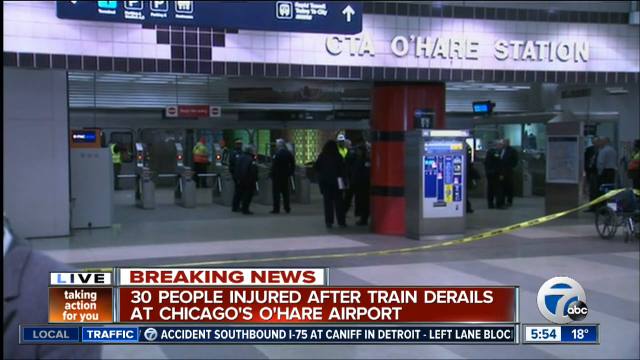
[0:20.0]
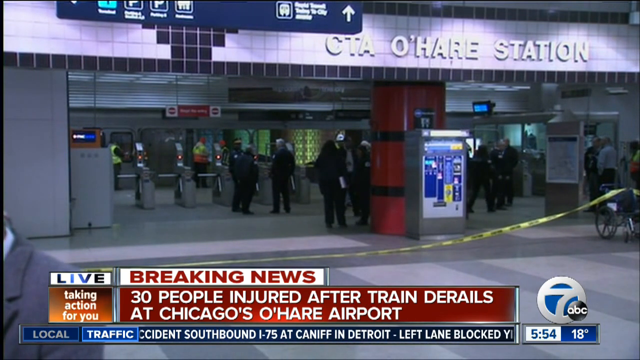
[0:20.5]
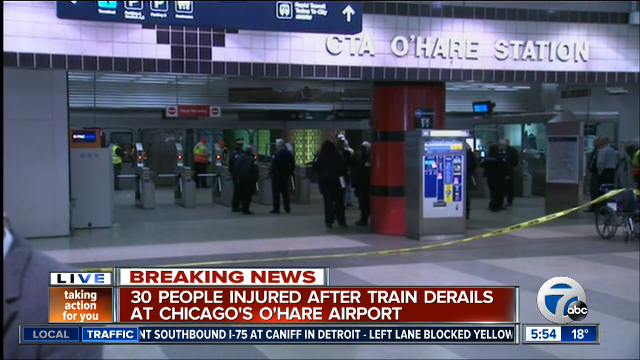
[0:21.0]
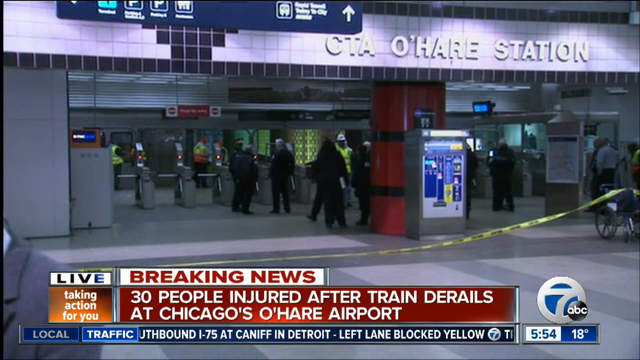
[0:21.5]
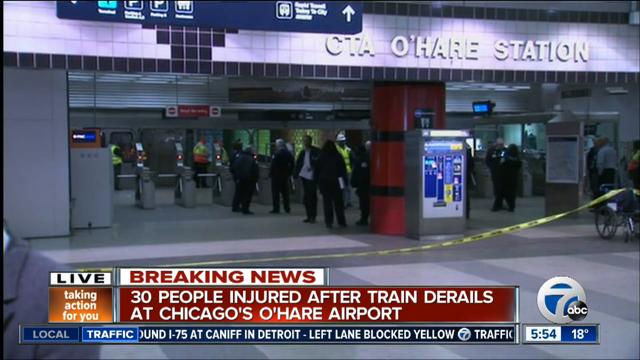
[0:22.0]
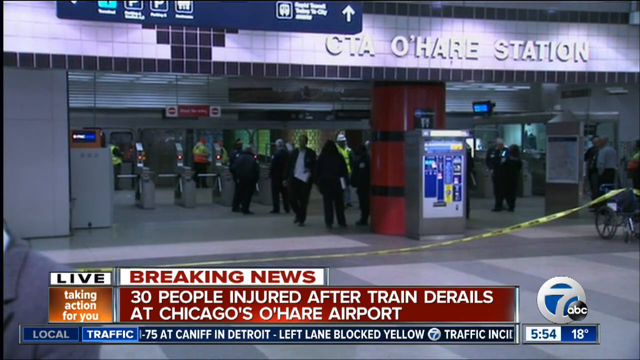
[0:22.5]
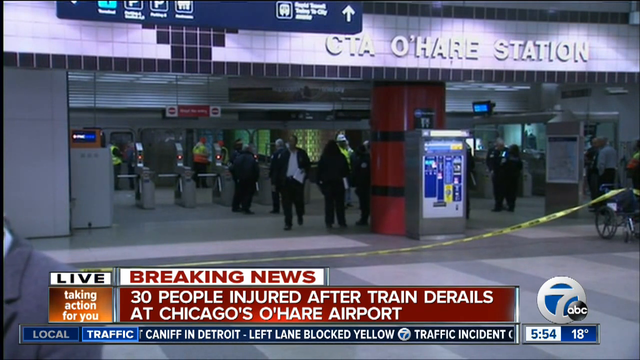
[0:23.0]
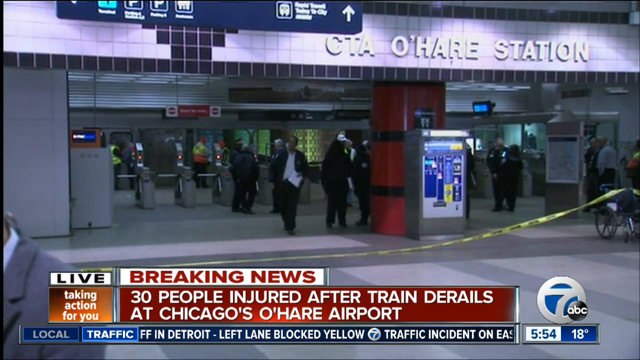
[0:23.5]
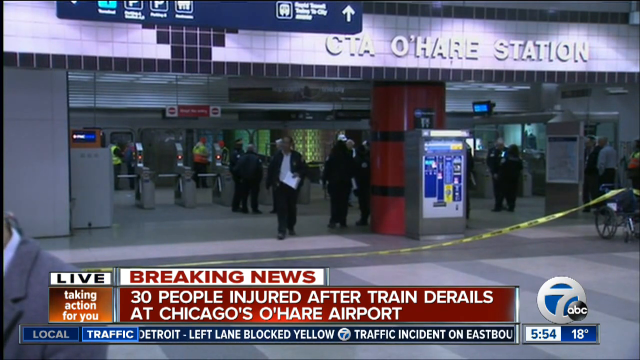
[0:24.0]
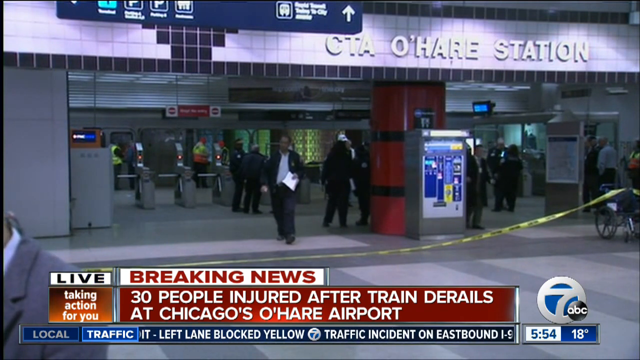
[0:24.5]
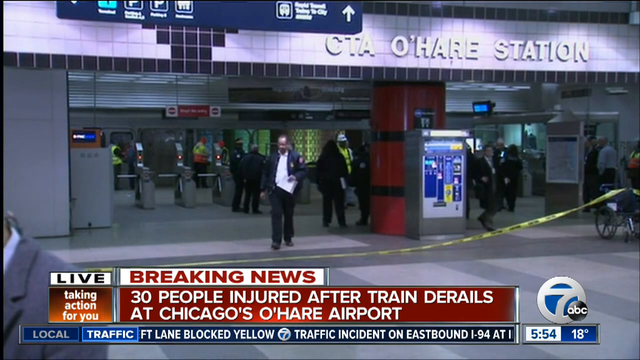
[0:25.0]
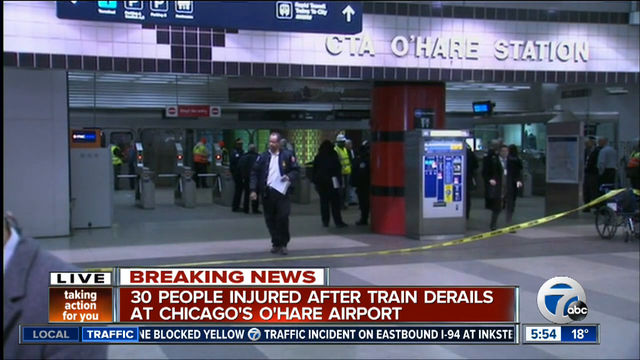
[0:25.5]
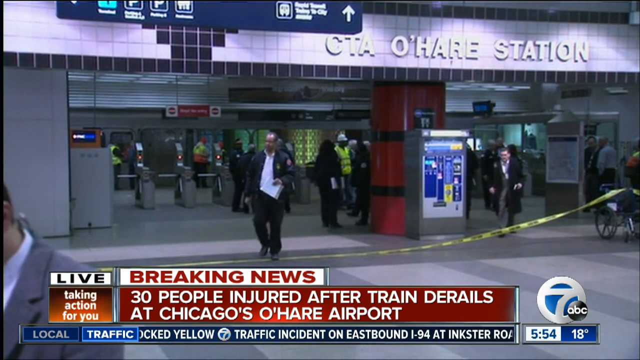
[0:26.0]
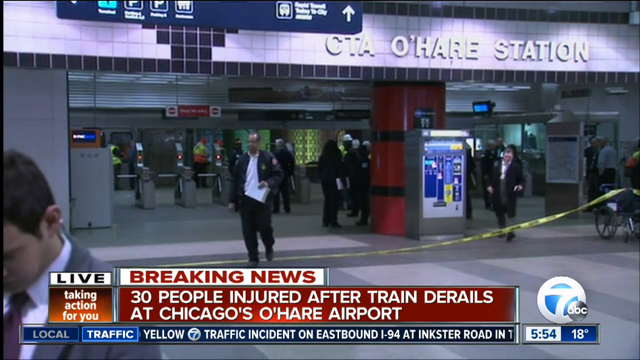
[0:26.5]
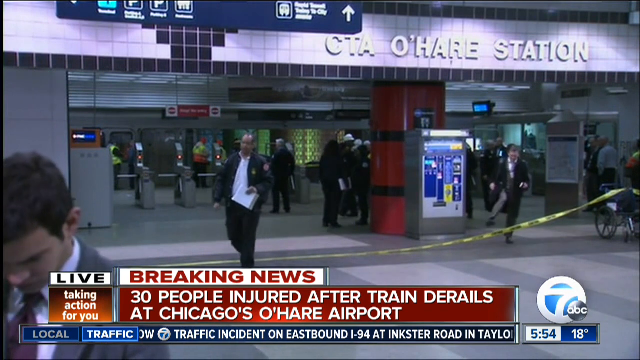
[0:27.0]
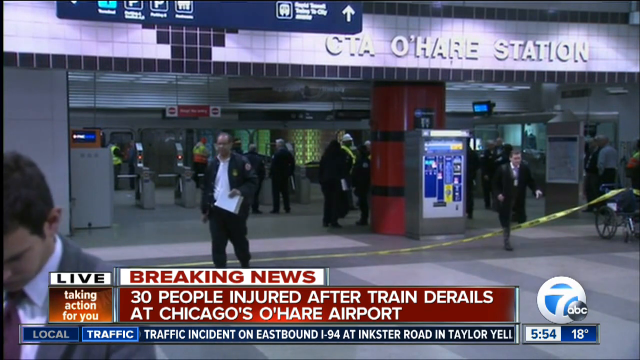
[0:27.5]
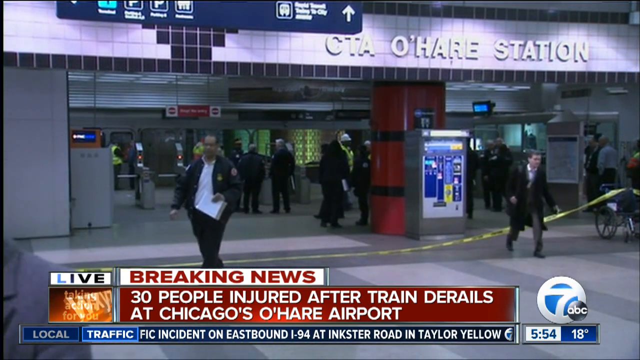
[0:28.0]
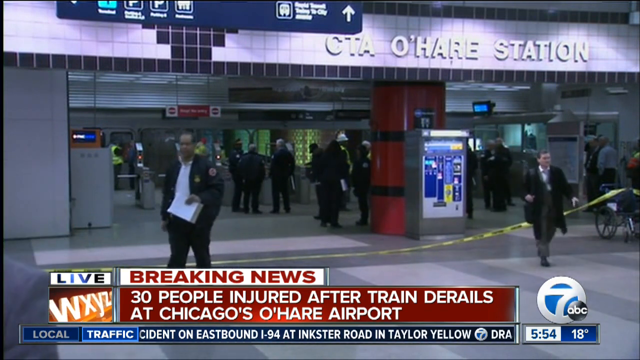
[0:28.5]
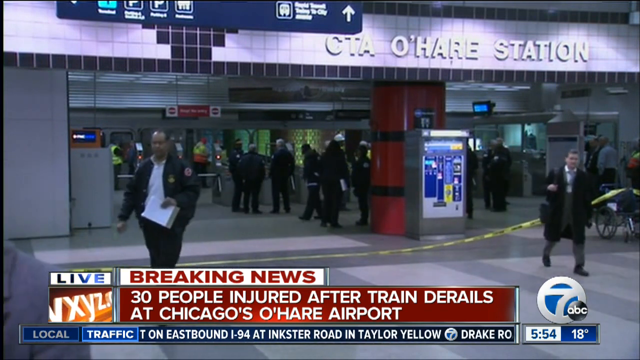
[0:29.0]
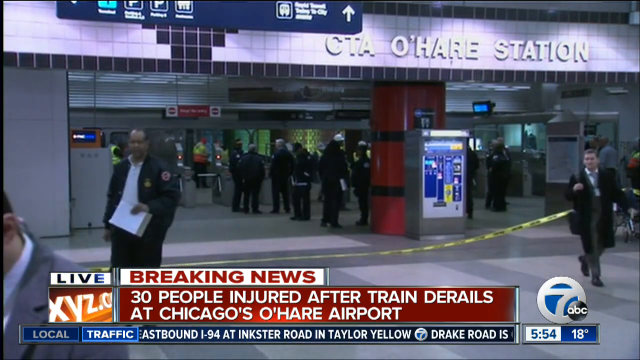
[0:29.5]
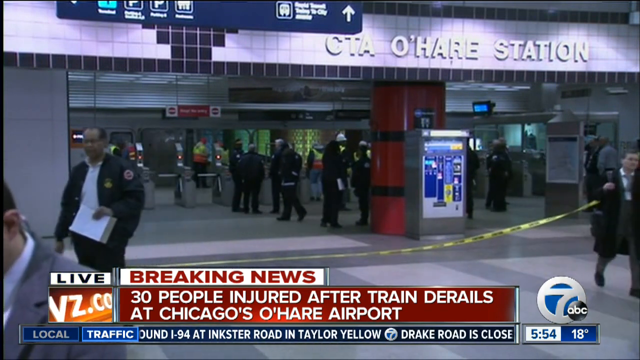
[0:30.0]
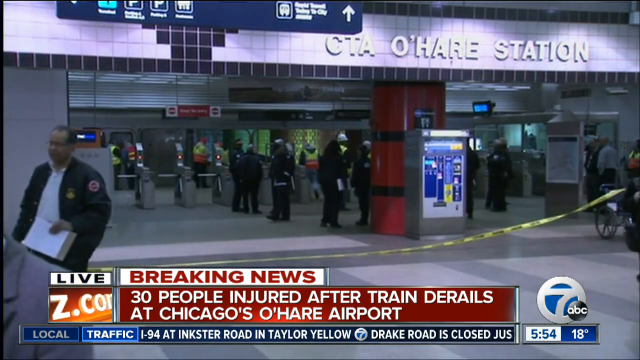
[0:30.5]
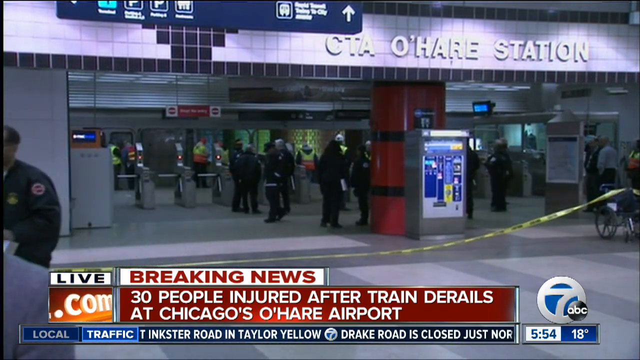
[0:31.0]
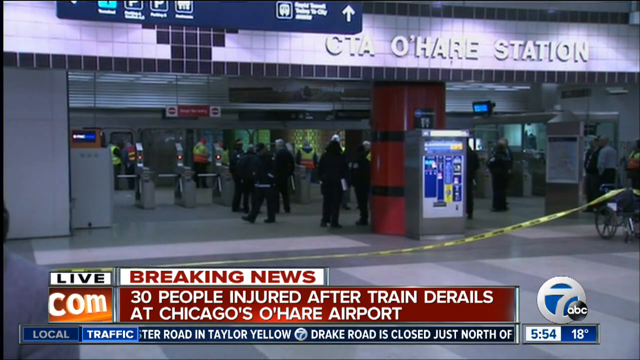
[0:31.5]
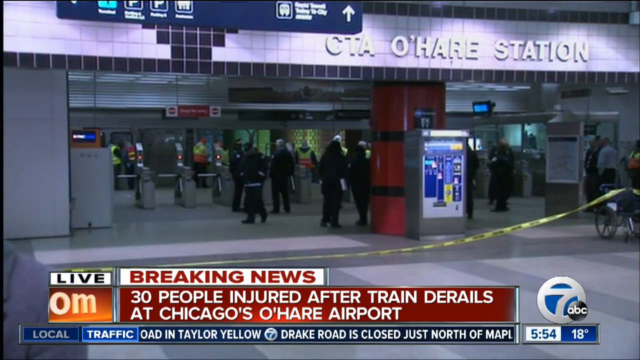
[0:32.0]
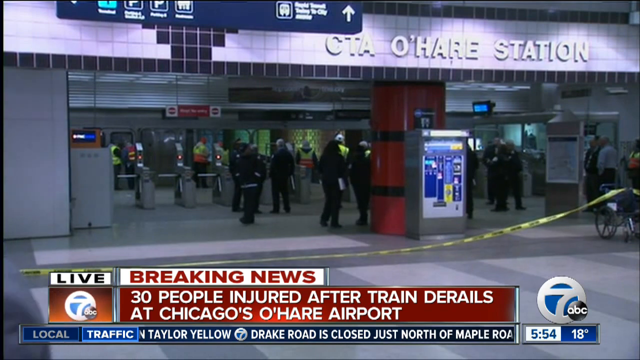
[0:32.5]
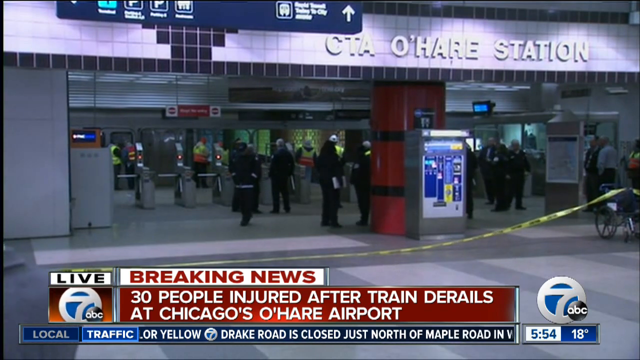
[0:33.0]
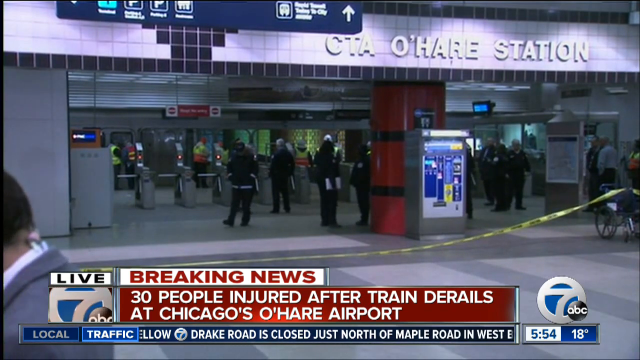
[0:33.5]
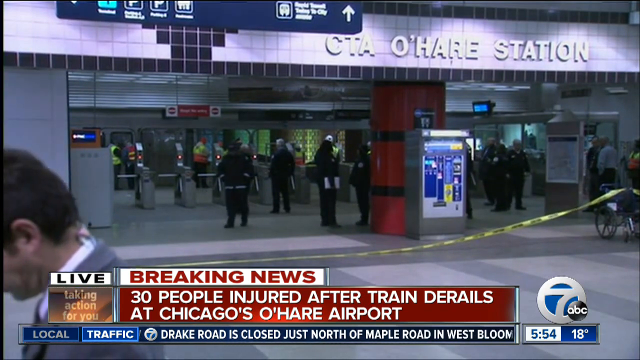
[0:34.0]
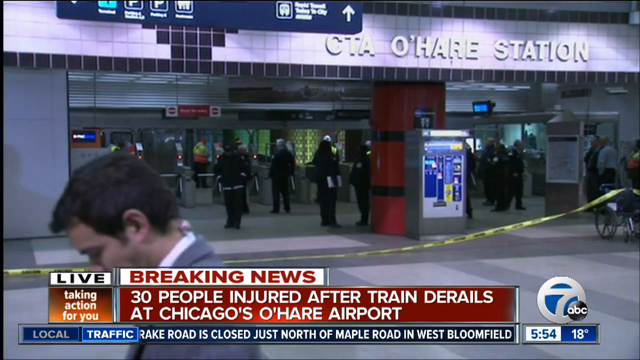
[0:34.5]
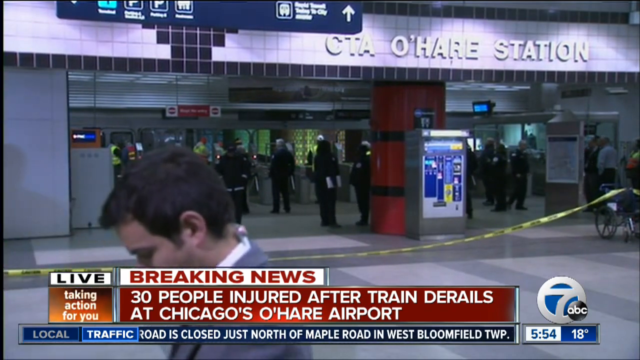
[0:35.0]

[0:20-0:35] Multiple people, officers, walk outside and appear to be investigating a possible crime. A banner at the bottom of the screen says it is live and reads "30 people injured after a train derailed at Chicago's O'Hare Airport." Multiple people walk toward the camera, as though heading back to their stations or police vehicles, perhaps to give updates. They have paperwork in their hands. One appears to have a laptop bag over his shoulder; he is dressed in formal wear with a dark coat. A man keeps appearing at the very forefront of the video. He seems to be preparing information; he is reading and keeps his head looking down. He is white, has a very proper haircut, and wears a suit or suit jacket, only a piece of which is visible.